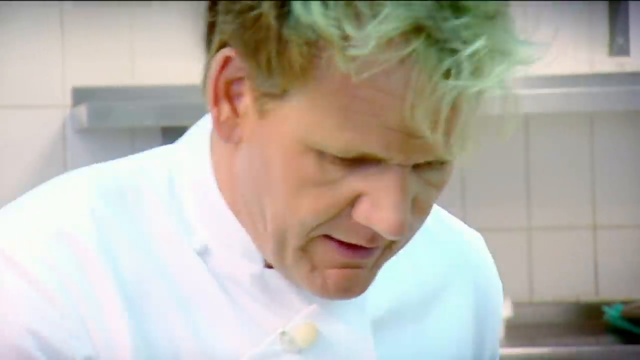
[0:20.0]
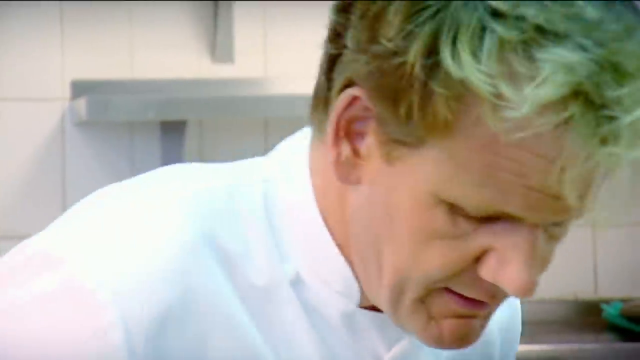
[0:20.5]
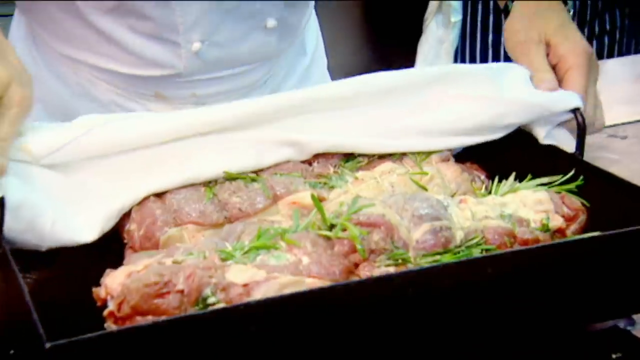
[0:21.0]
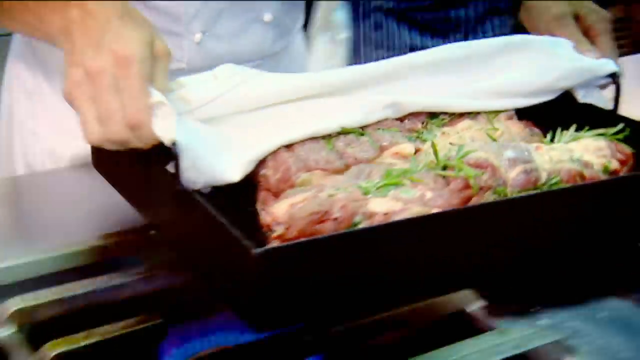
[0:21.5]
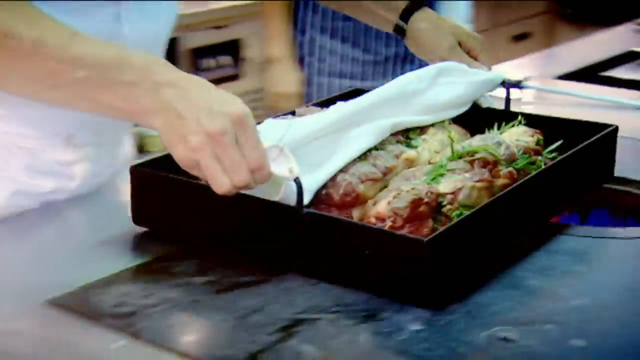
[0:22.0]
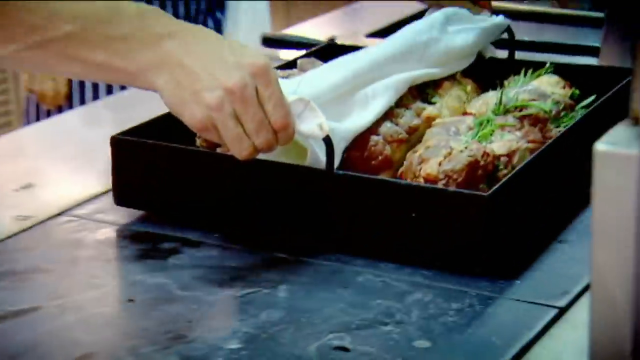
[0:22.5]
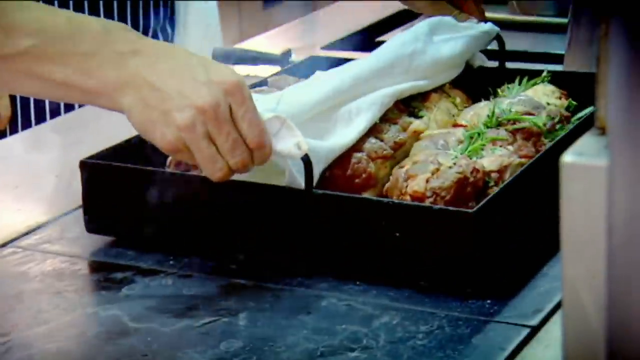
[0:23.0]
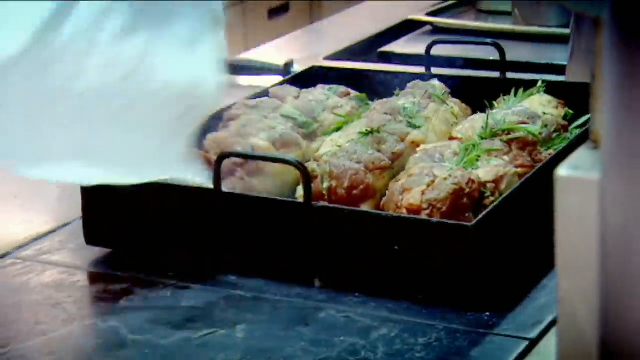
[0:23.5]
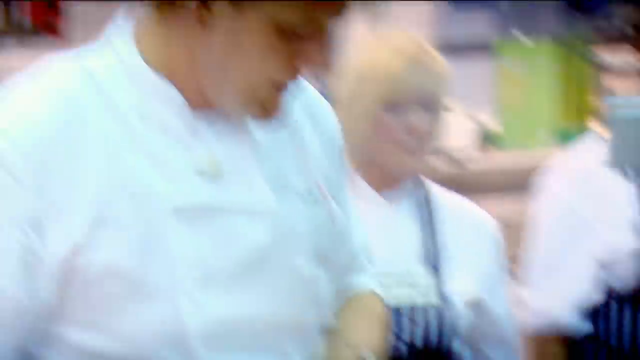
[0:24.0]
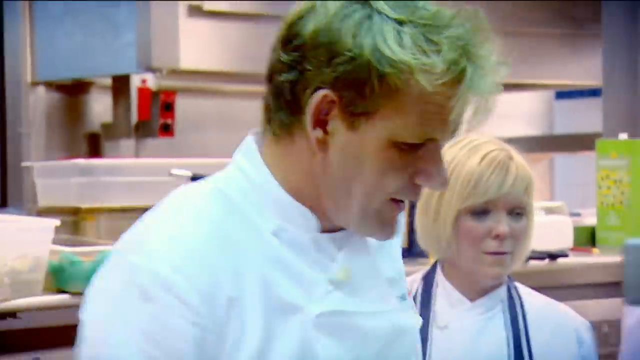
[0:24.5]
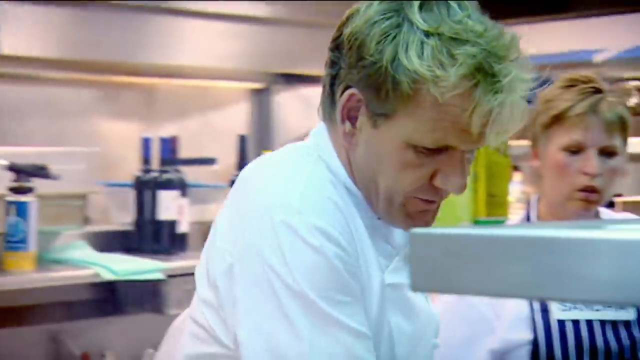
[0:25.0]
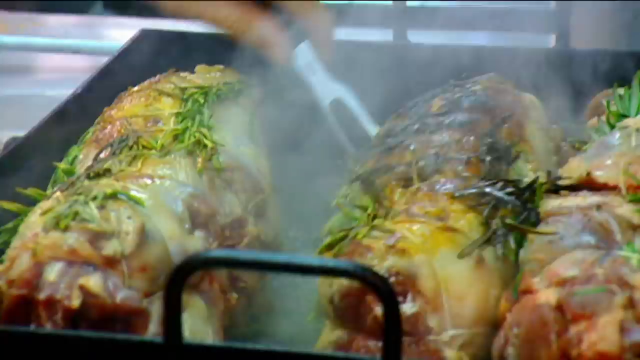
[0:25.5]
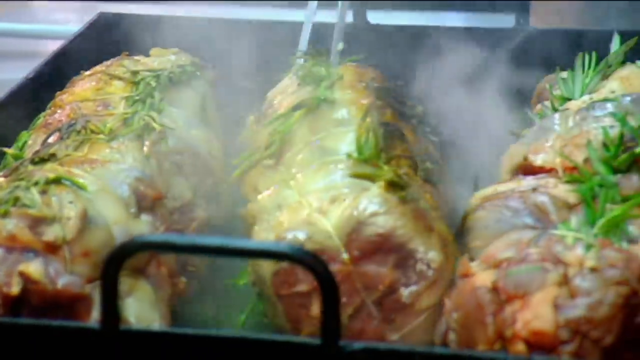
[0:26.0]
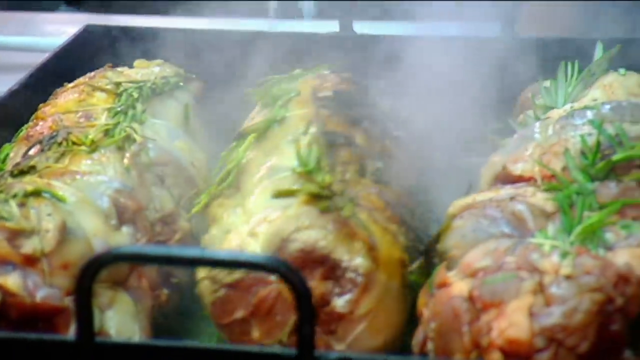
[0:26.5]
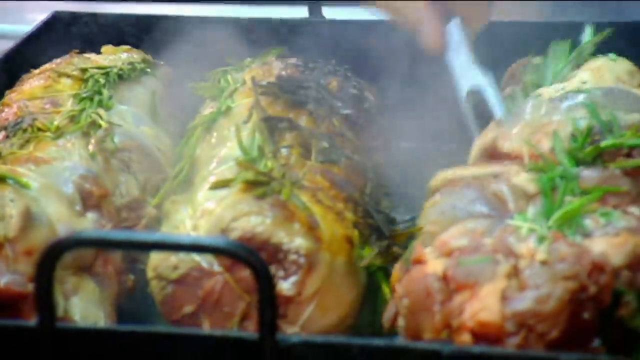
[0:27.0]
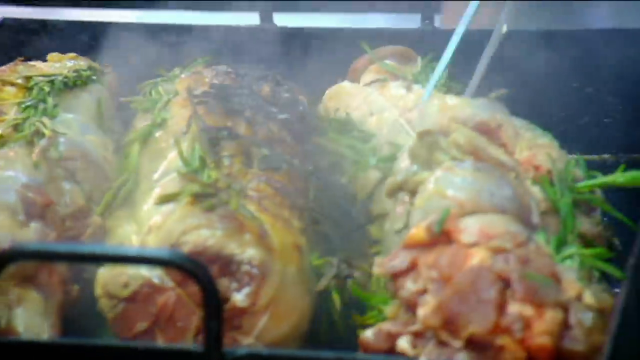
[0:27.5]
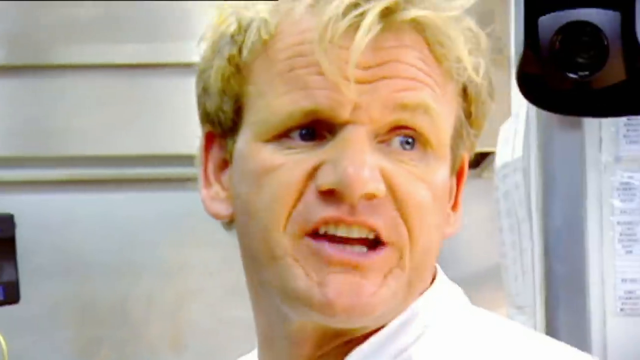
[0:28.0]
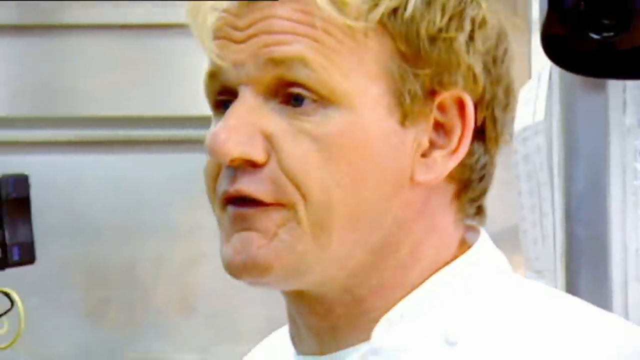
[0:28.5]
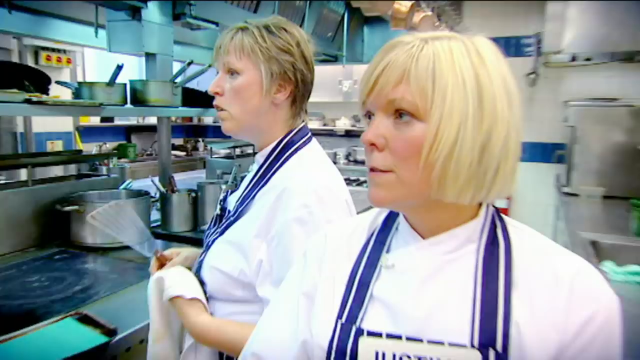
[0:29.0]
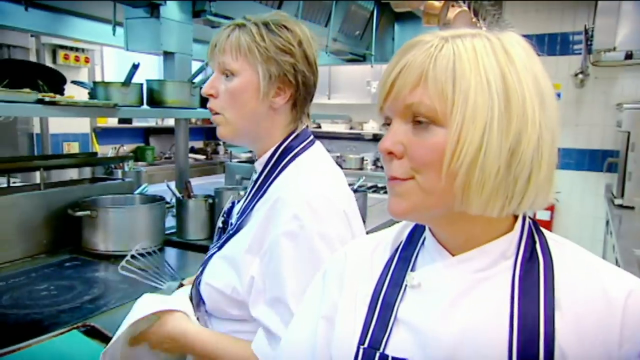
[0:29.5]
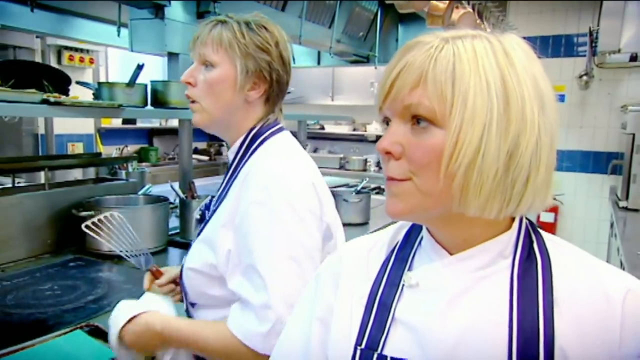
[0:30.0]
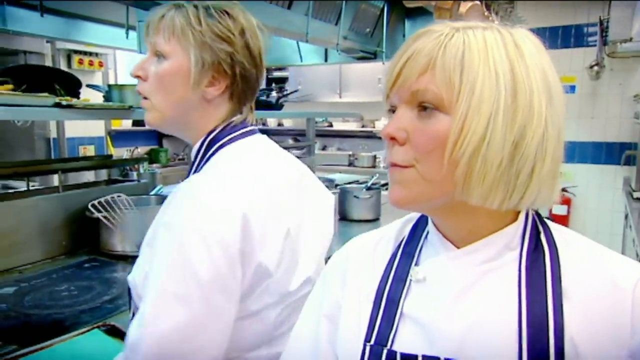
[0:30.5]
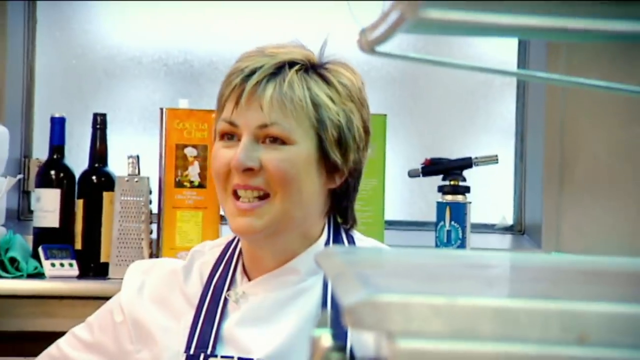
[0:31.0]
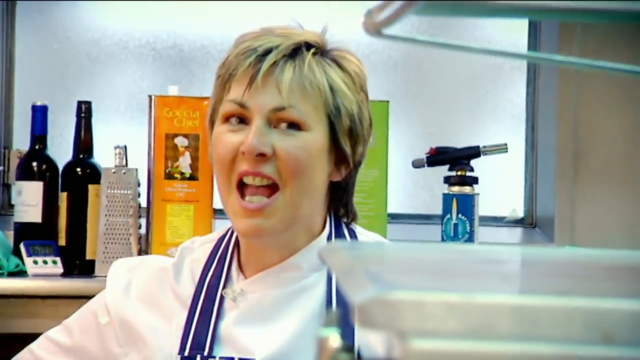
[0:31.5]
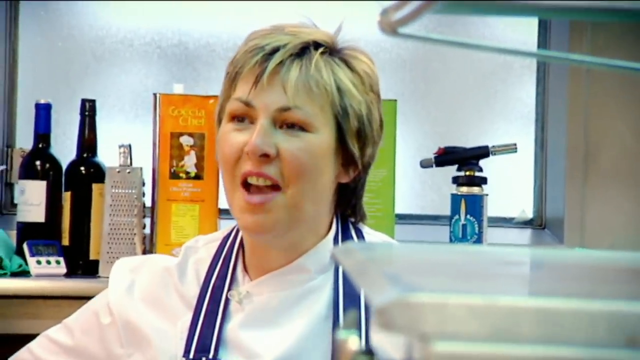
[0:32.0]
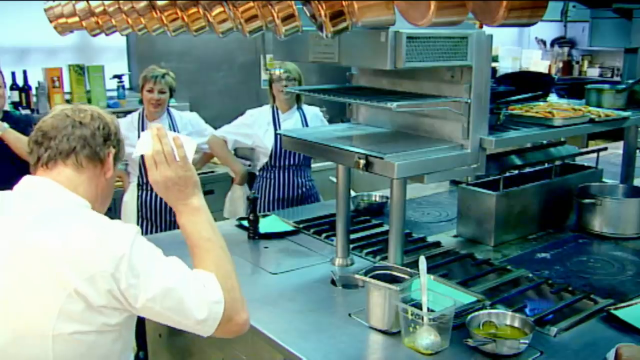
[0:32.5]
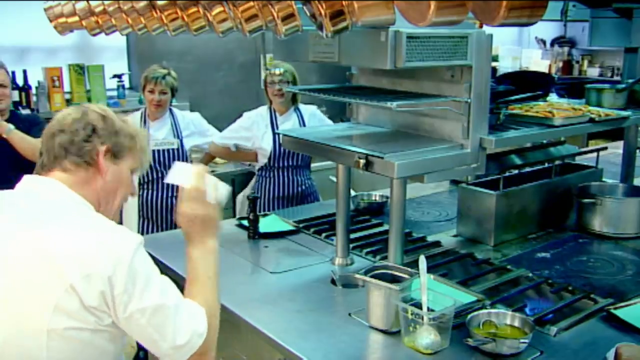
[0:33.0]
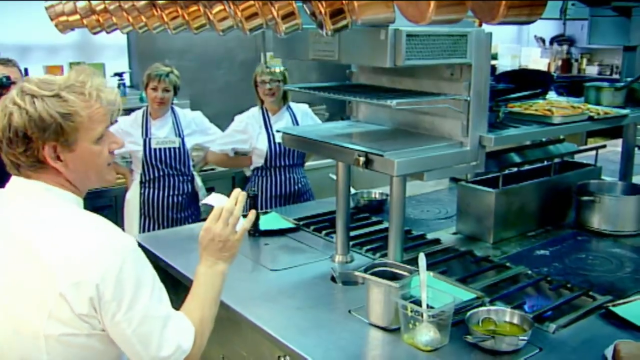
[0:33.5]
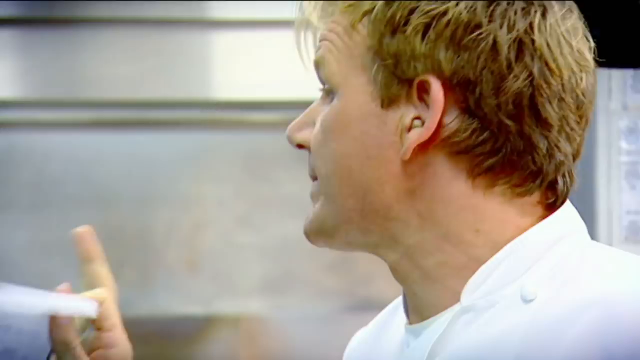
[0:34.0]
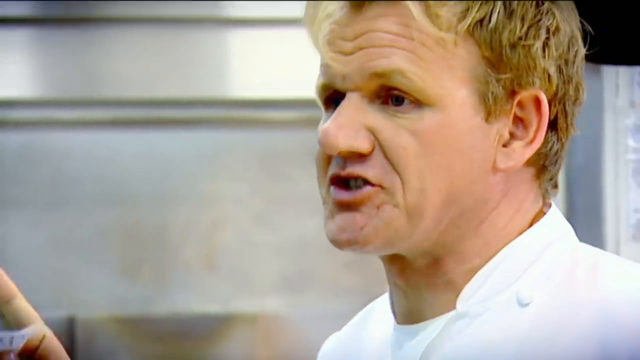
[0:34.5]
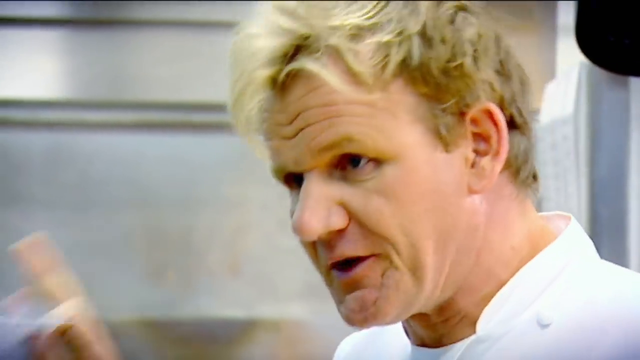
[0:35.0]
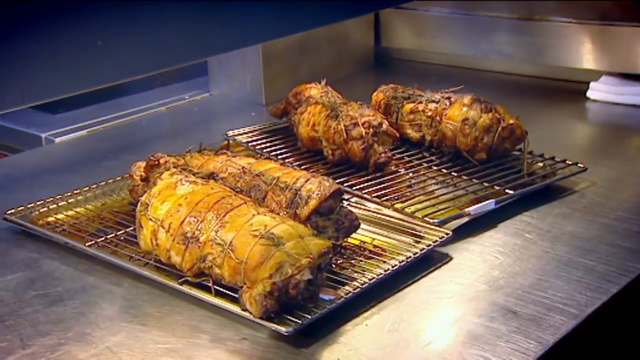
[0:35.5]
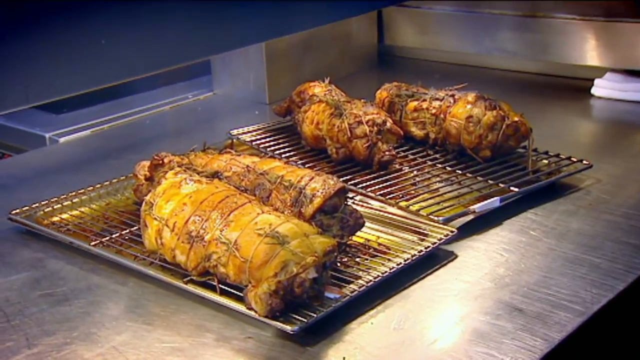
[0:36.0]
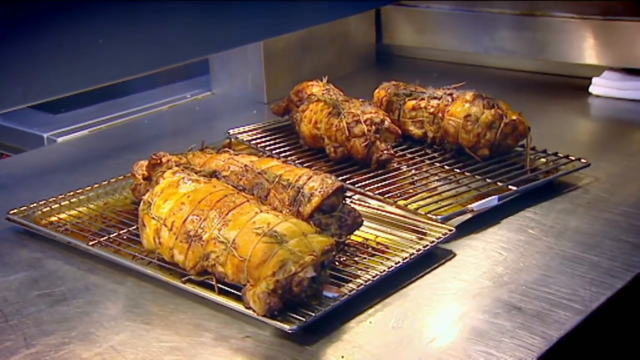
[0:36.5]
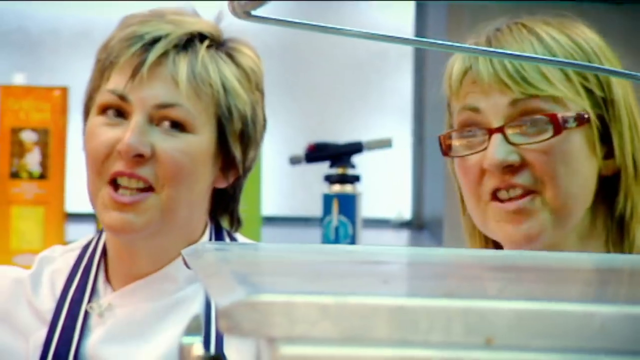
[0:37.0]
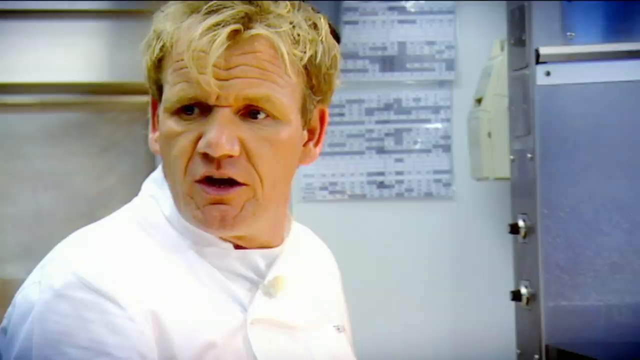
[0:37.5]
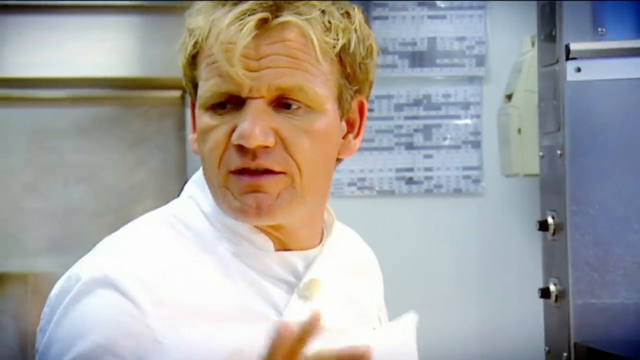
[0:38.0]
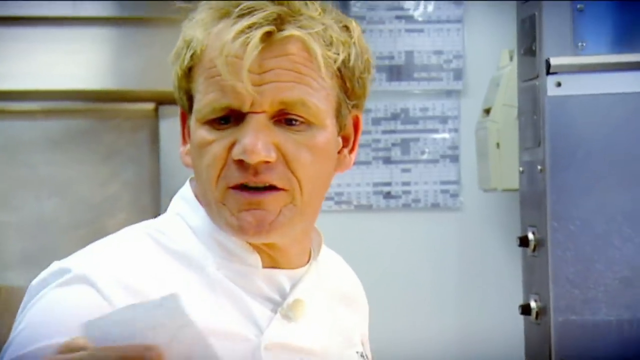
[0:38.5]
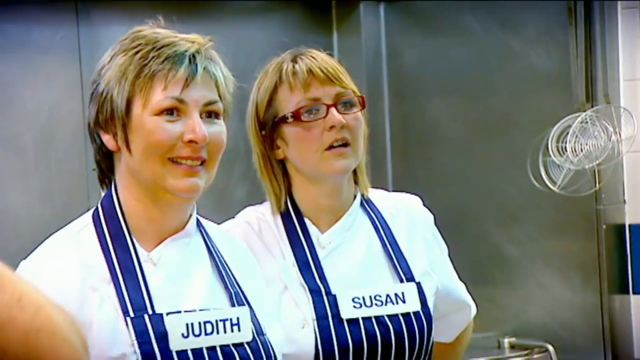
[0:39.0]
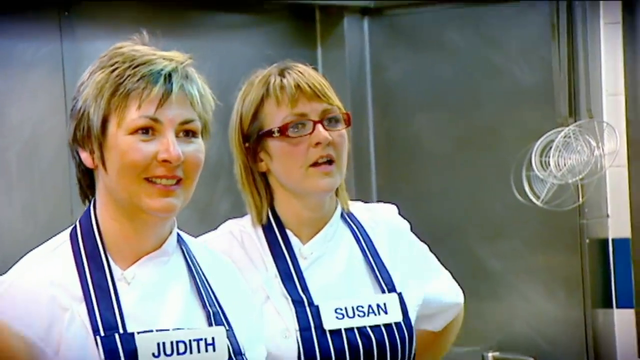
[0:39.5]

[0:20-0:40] Having finished seasoning and preparing the meat, the man puts it on the grill and turns it over, talking to the chefs as they listen with great interest. A lady talks as they give comments on how the meat is being grilled, and the man lifts his hands as he explains something in depth. The finished meat then lies on trays: four big pieces tied with string, all done and looking juicy. The other chefs look very happy and show that they like it. Another man turns back to them holding a paper and talking to them, and the ladies continue talking to him.